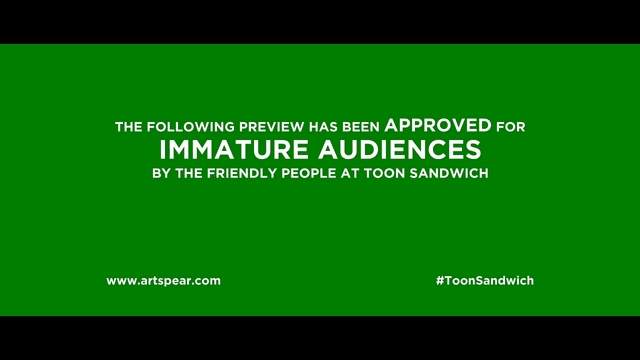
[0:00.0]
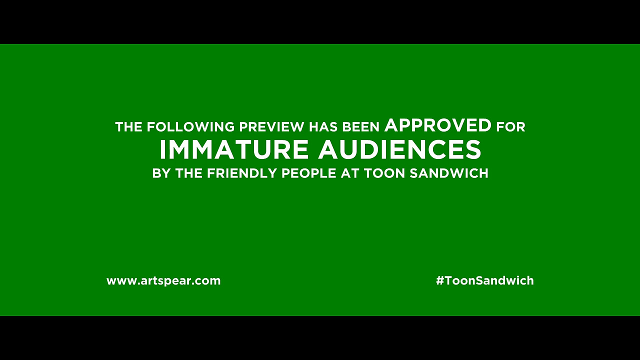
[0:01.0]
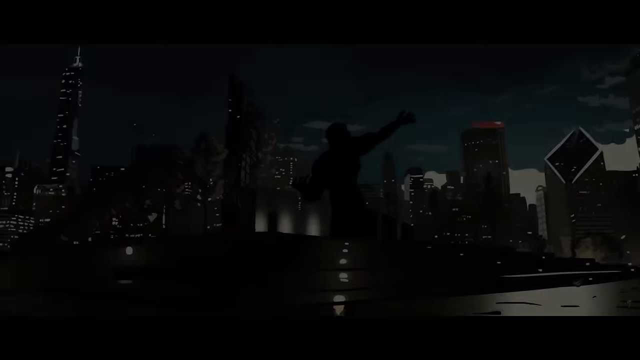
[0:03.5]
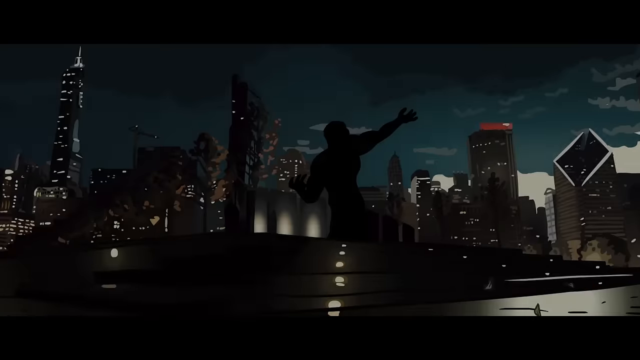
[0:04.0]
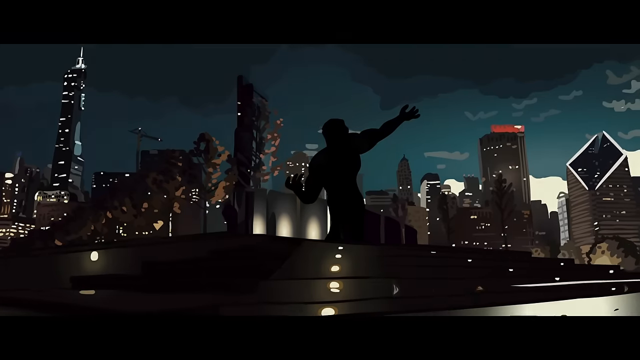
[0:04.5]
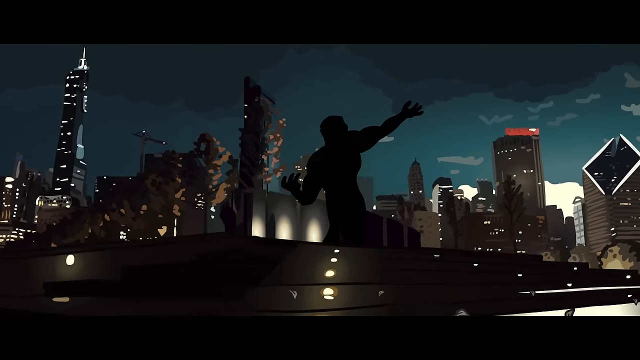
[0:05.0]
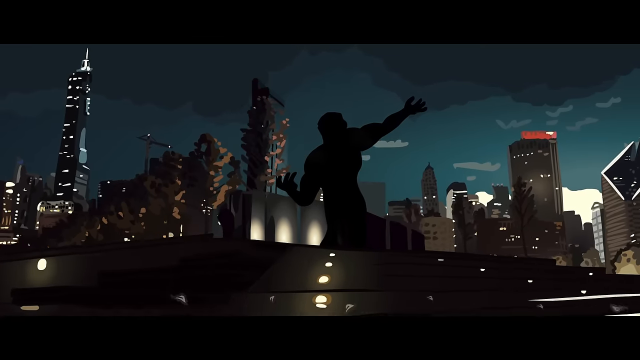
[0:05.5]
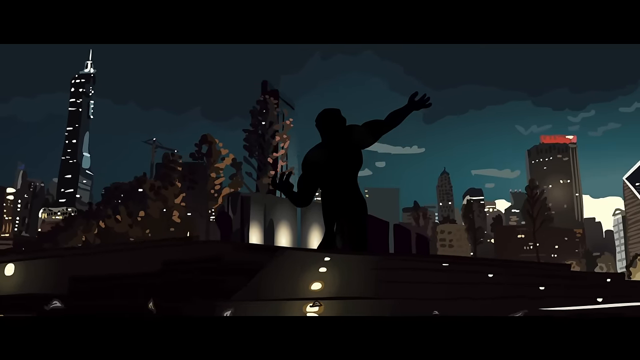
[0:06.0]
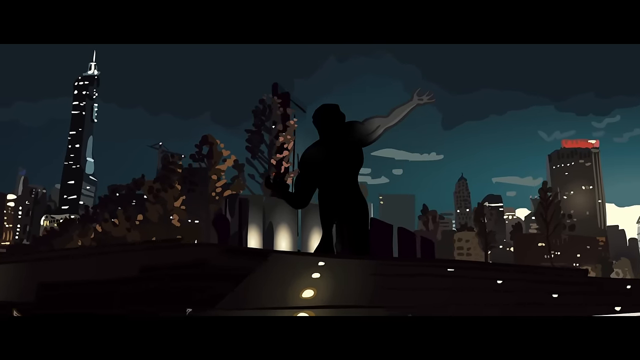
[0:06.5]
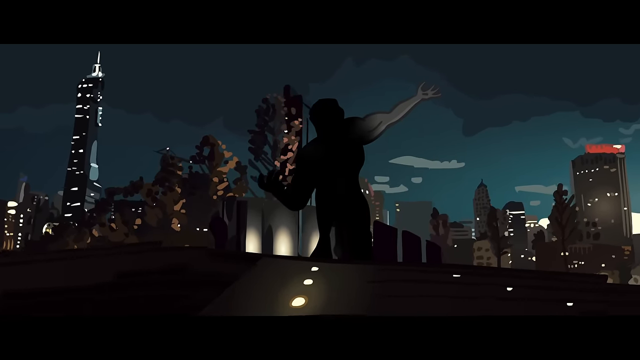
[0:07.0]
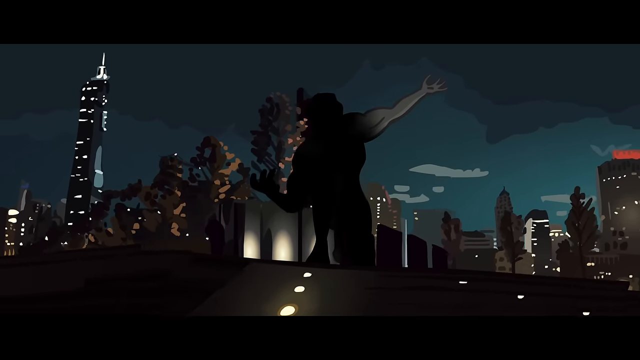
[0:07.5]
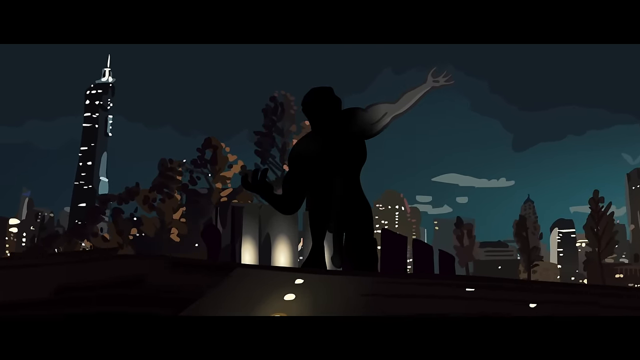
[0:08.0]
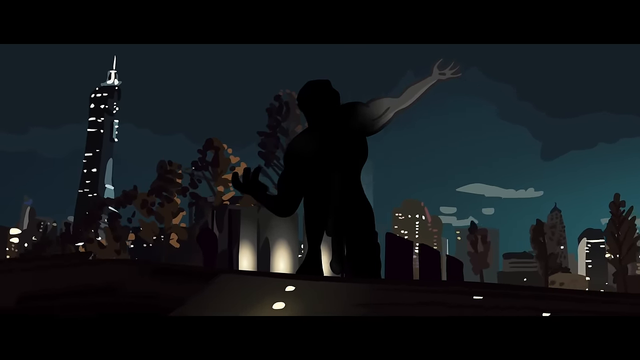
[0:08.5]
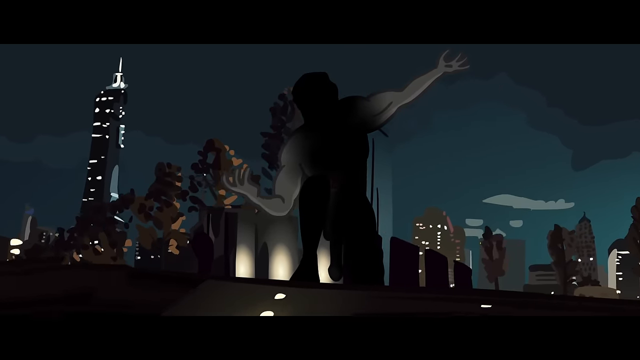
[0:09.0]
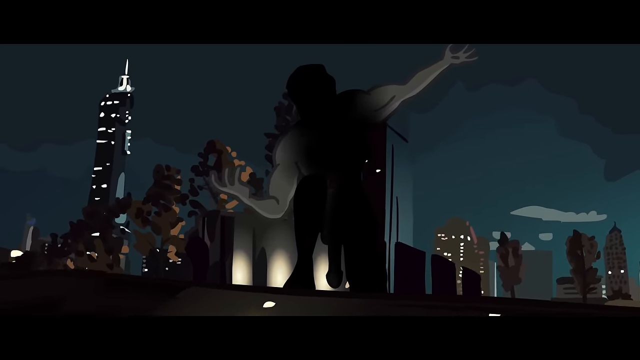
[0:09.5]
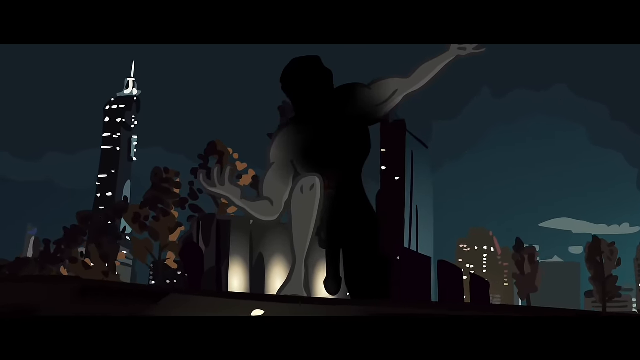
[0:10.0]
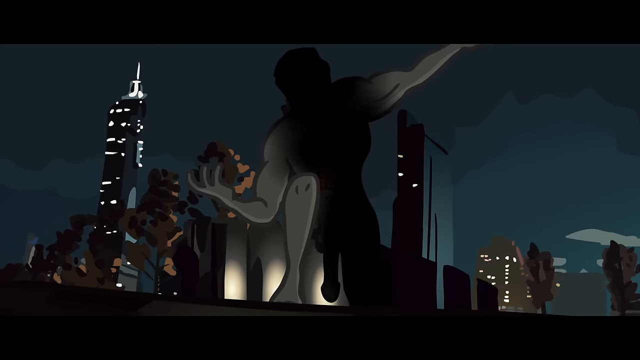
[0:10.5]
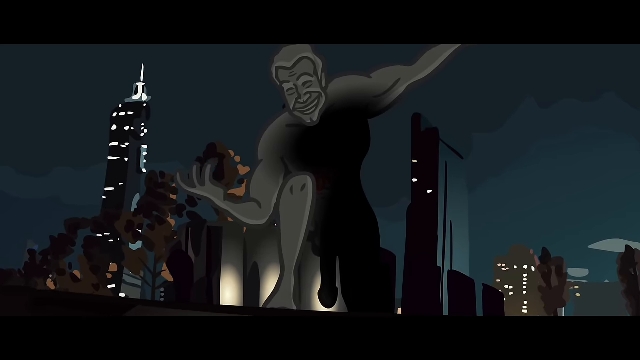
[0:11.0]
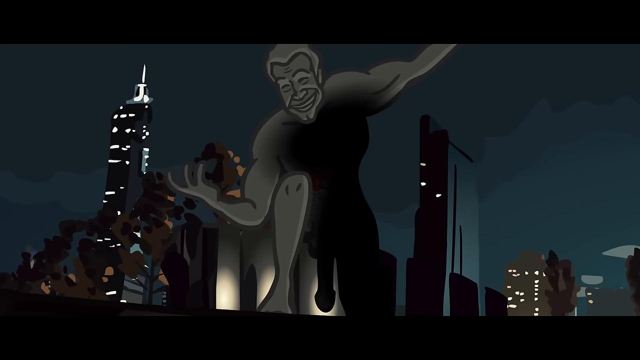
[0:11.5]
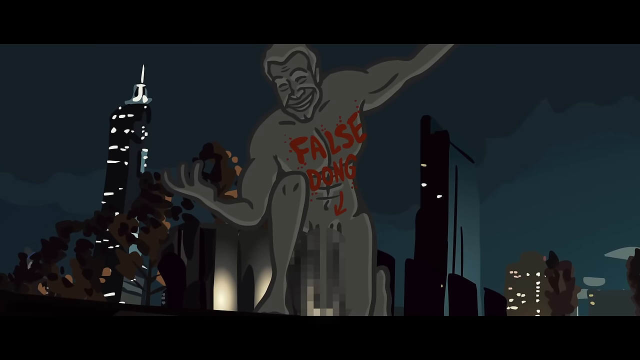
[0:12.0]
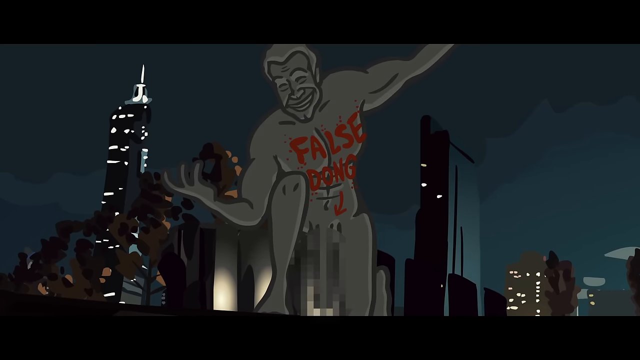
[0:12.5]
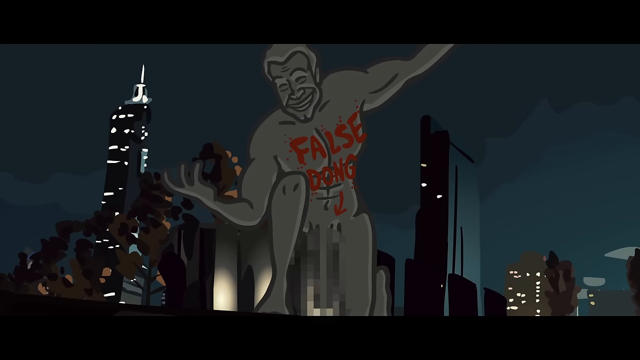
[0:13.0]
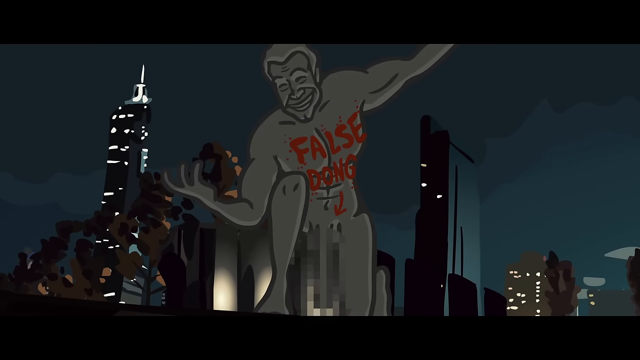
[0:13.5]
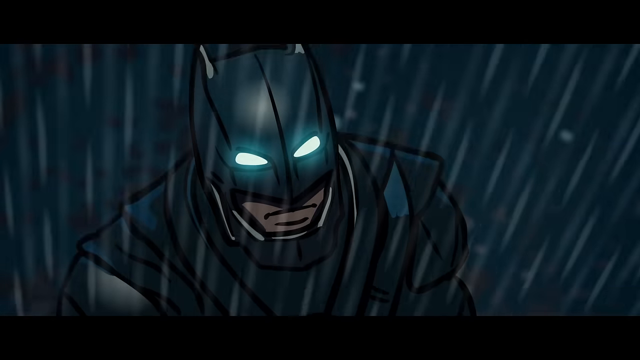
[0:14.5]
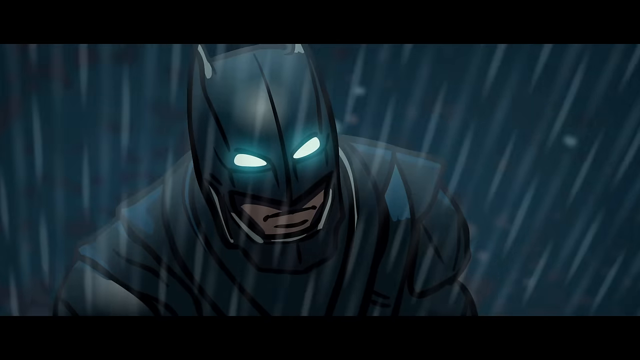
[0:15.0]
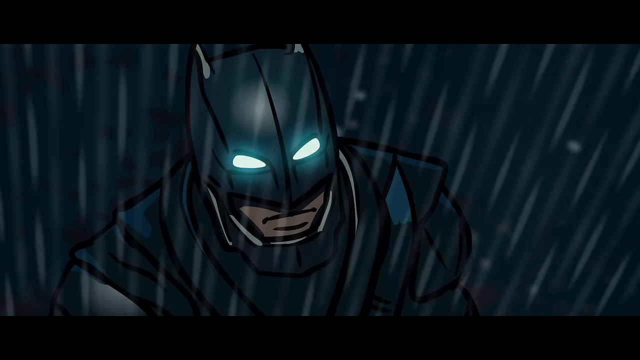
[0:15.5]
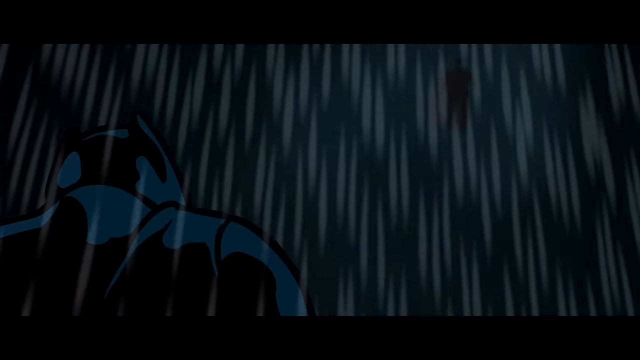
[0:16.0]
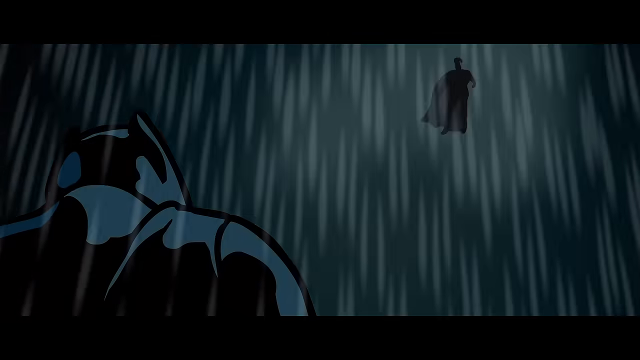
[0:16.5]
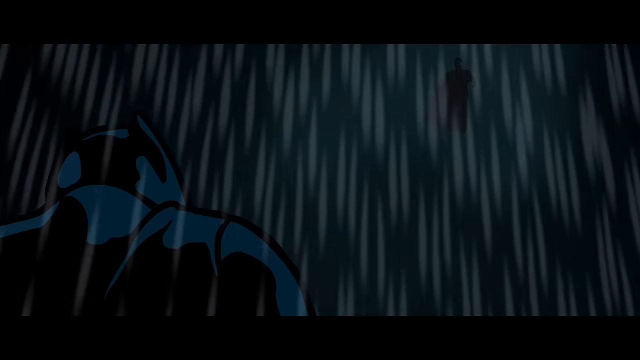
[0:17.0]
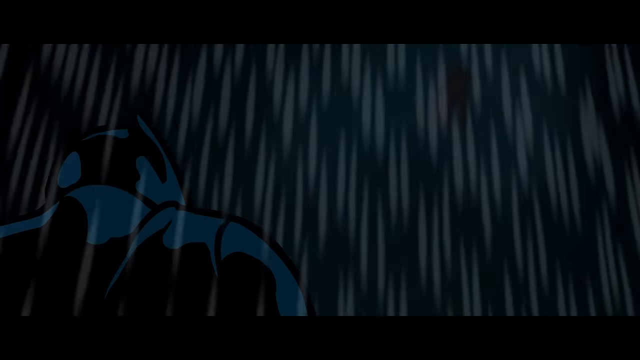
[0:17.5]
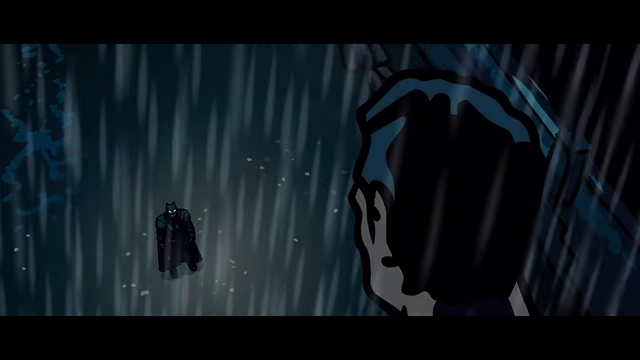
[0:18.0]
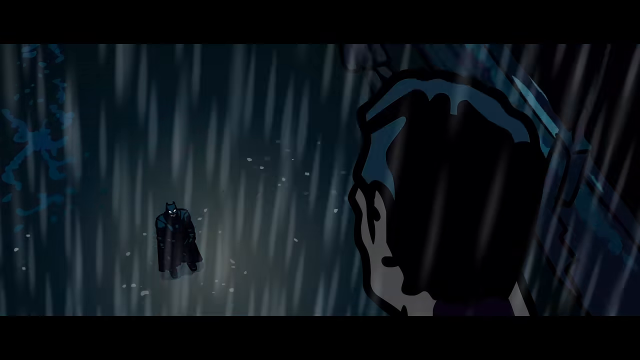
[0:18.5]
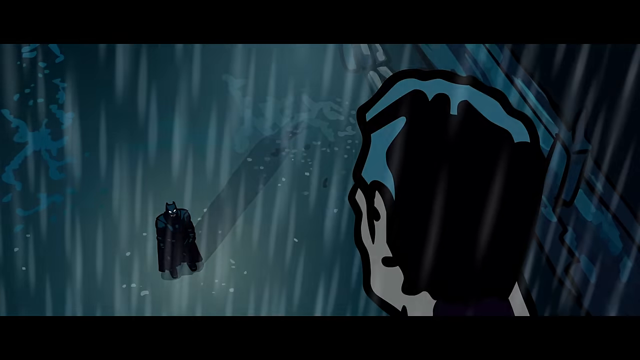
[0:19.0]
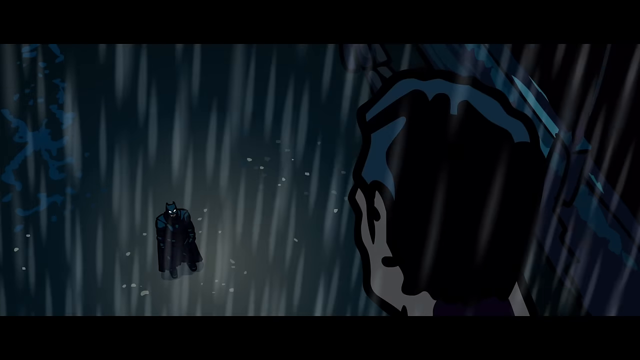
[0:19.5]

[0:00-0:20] The video opens on a green screen presenting what looks like a humorous take on a preview, with text reading "the following preview has been approved for immature audiences by the friendly people at Toon Sandwich." The screen goes black. A city skyline appears, with a statue of a muscular man in the foreground. At first only its silhouette is visible: it appears to be leaning back, its left hand reaching up toward the sky and its right hand back behind it, with the right elbow bent at a 90-degree angle. Some light illuminates the left and right arms, which appear to be gray. The figure turns out to be kneeling, with its right foot on the ground. Its crotch is blurred out, and on its chest someone has written "false dong" in red paint.